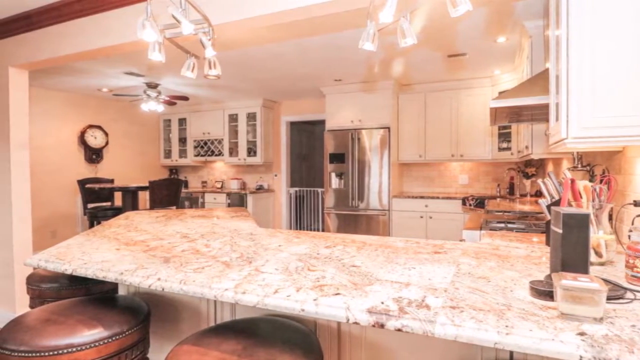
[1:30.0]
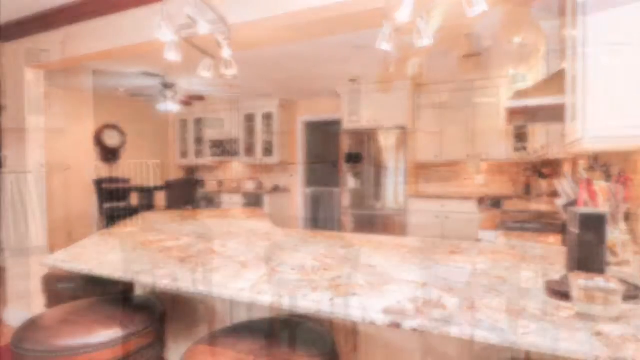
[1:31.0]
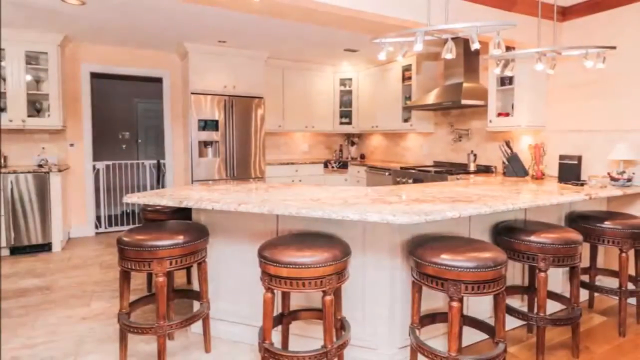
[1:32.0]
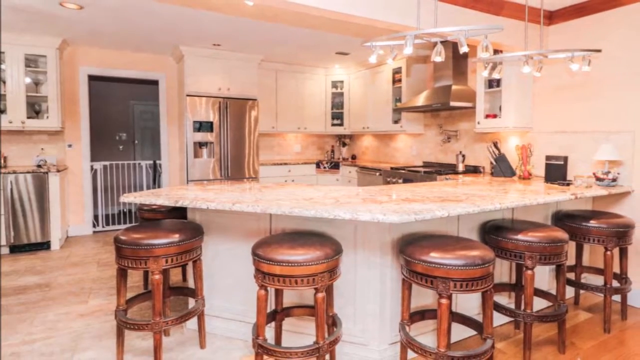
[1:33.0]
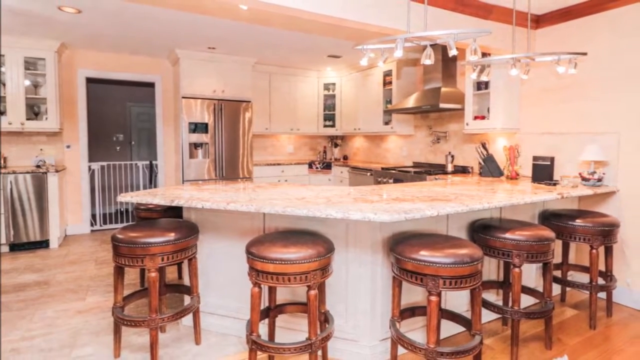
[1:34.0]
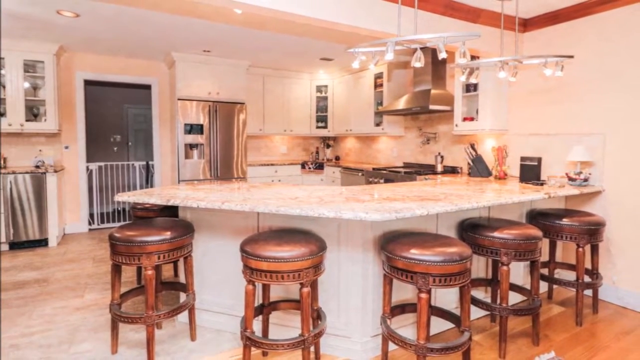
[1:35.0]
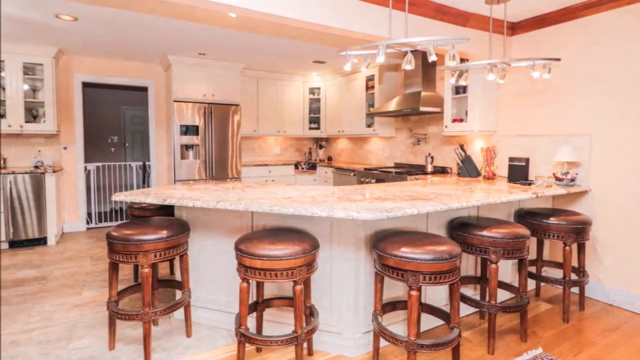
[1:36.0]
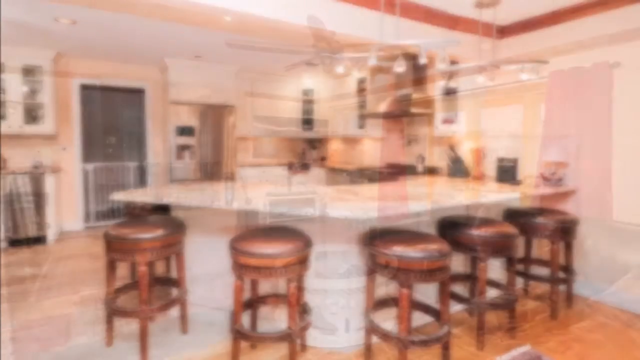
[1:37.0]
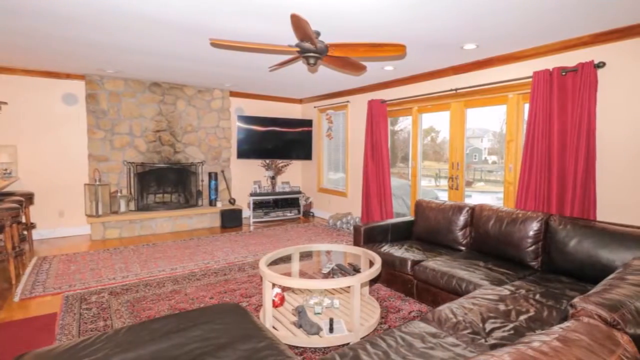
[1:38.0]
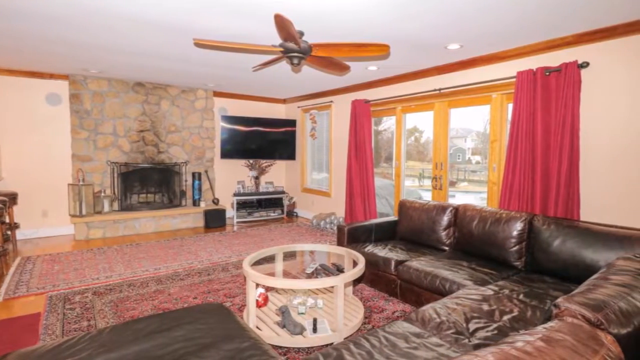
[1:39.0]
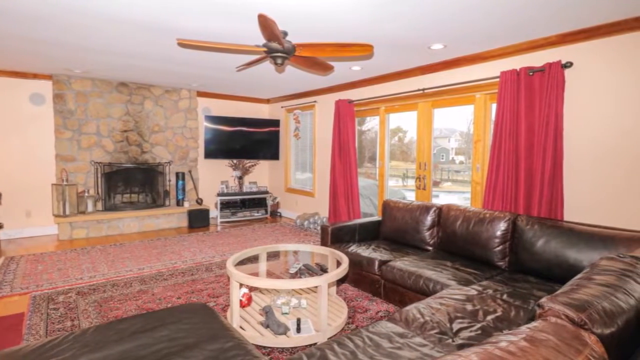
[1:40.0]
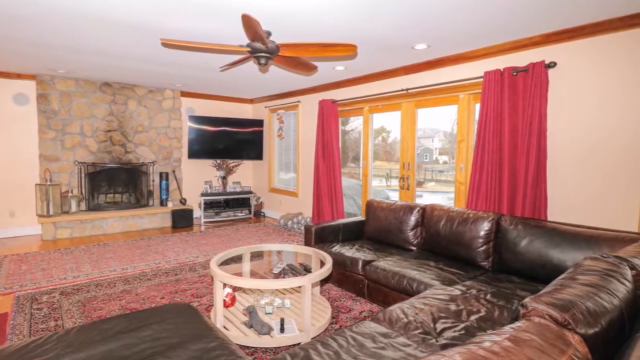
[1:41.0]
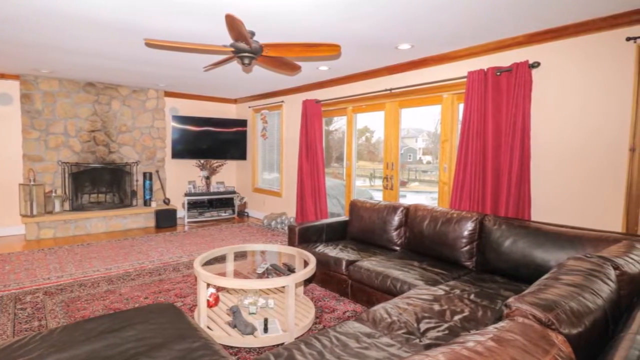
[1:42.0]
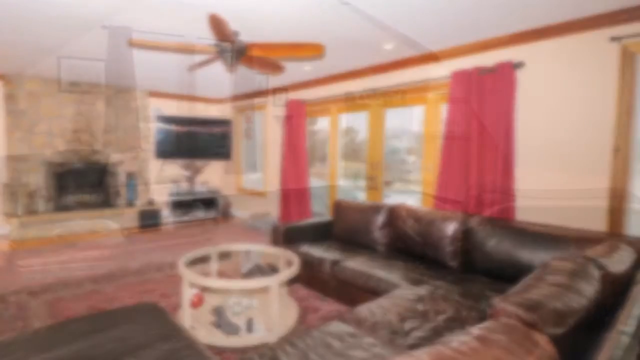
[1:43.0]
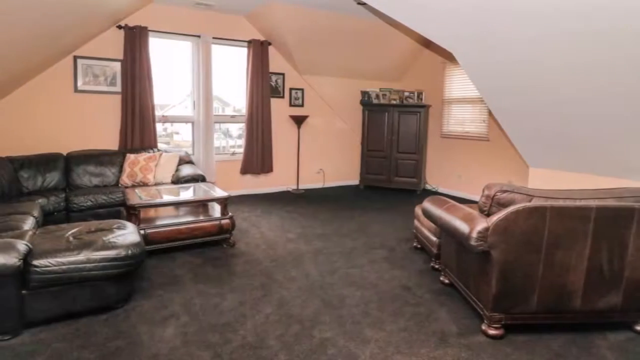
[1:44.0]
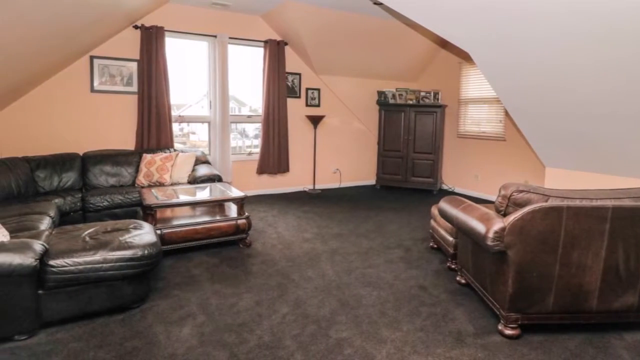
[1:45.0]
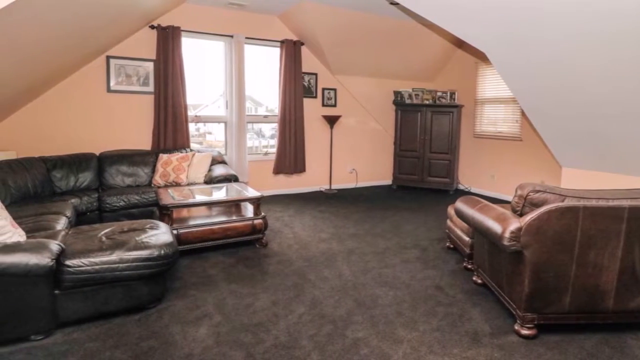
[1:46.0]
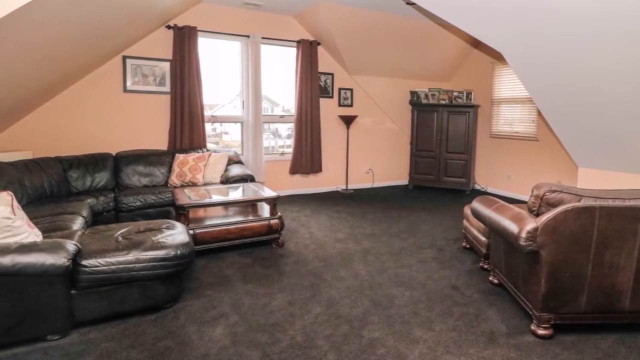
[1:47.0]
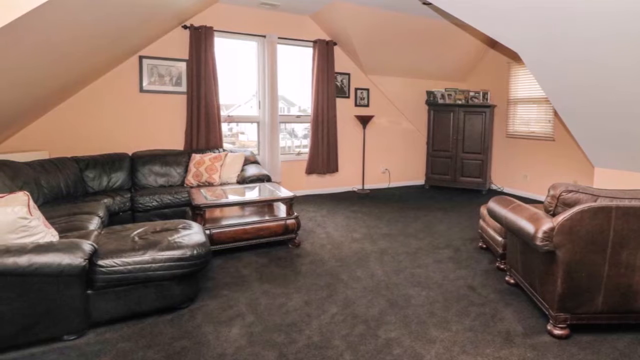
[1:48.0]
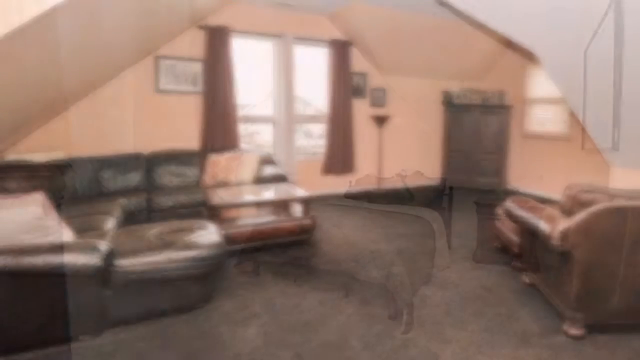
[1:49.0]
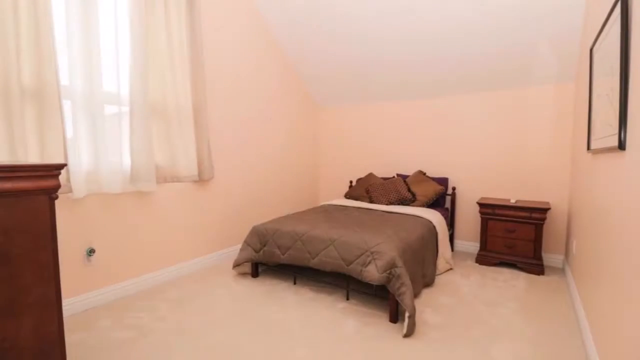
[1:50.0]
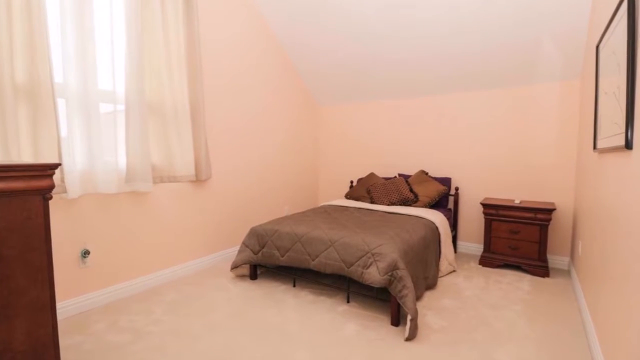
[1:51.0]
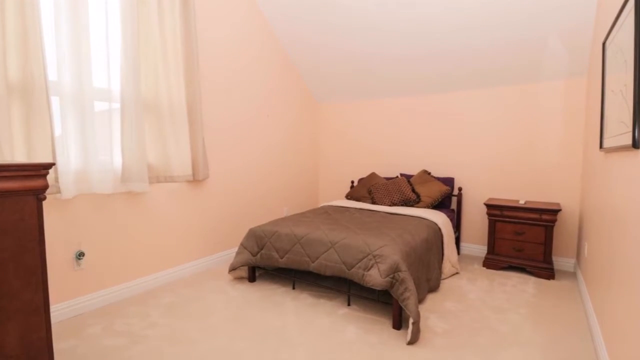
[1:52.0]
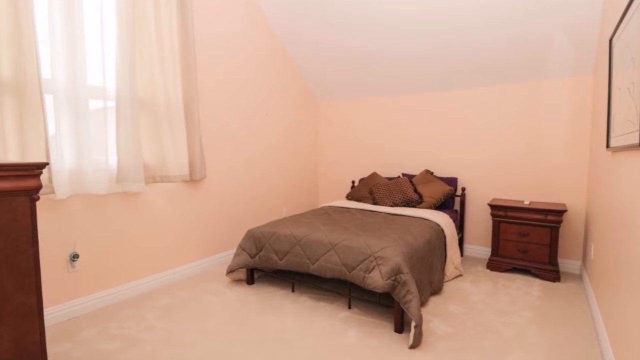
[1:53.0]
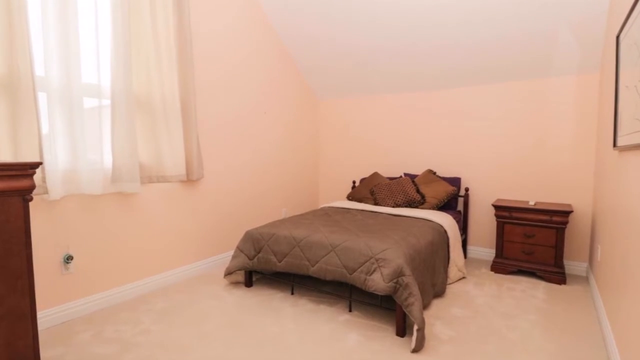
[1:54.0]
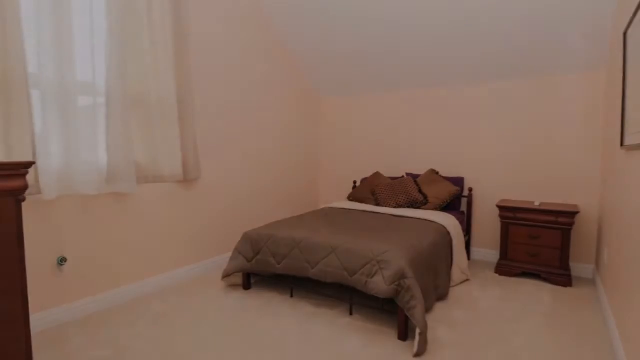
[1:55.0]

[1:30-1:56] A different angle of the kitchen shows five of the leather stools at the breakfast bar, with low-hanging lighting hanging down above it. A different angle of the living room follows: it is painted a cream magnolia colour, the woodwork is stained a darker wood colour, and big patio doors look outside. The fireplace, rather than the TV, is the centrepiece of the room, and there are a lot of blackened bits around it, suggesting it is used a lot. Another sitting room has a black leather corner sofa and a regular brown leather armchair; there seems to be no TV, so it is possibly just a sitting room. It has a window with curtains and a grey carpet. Finally, a very minimalistic bedroom contains not much furniture, just a bed and two cupboards.